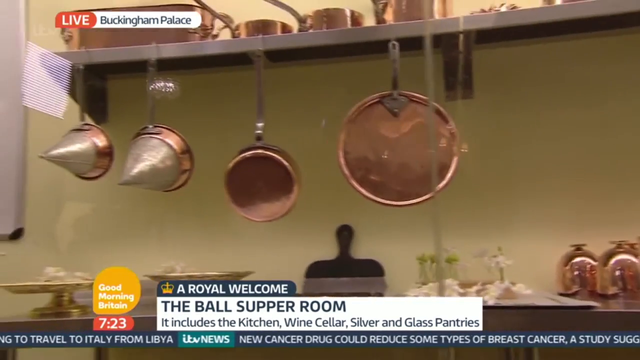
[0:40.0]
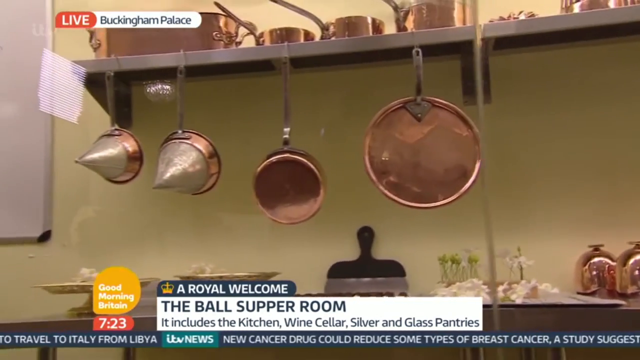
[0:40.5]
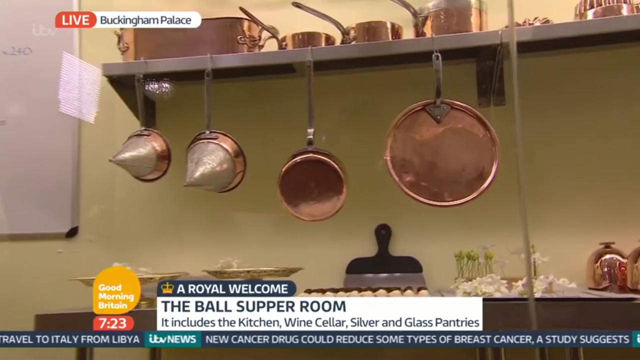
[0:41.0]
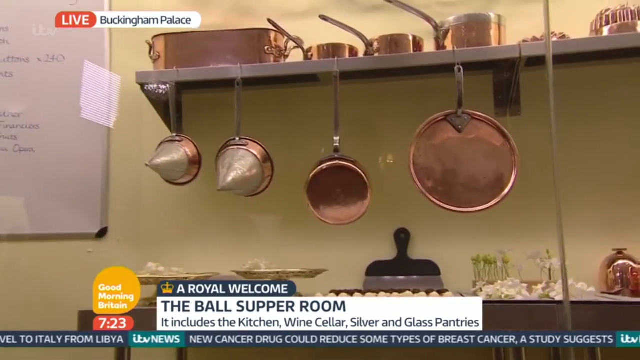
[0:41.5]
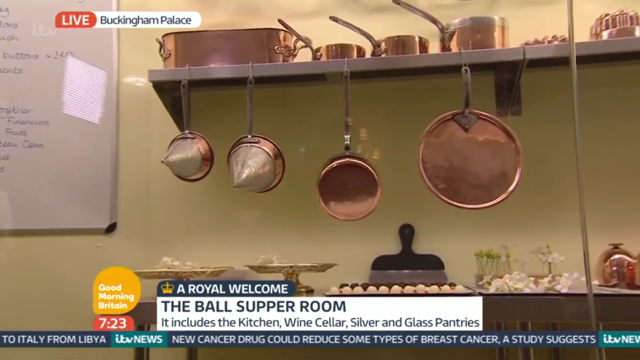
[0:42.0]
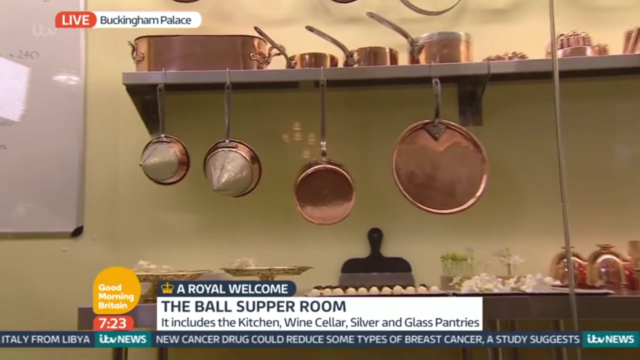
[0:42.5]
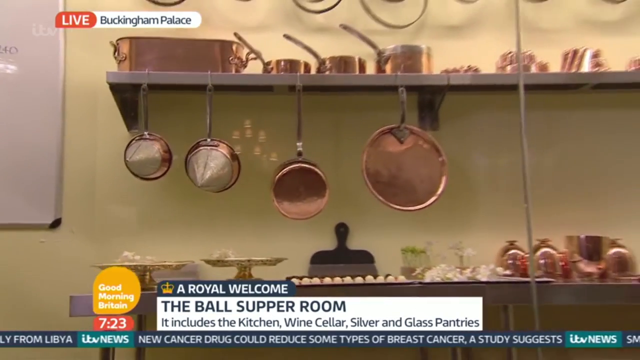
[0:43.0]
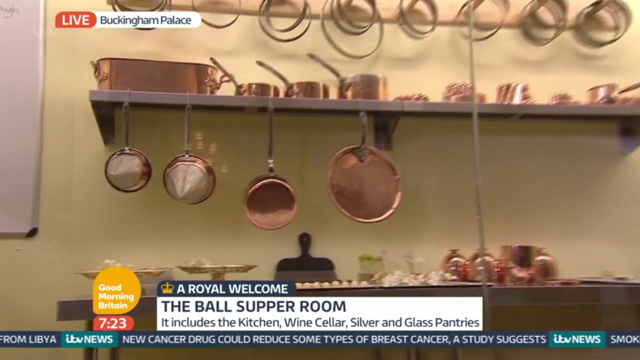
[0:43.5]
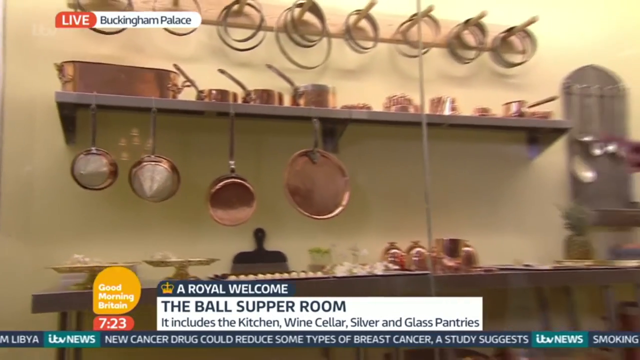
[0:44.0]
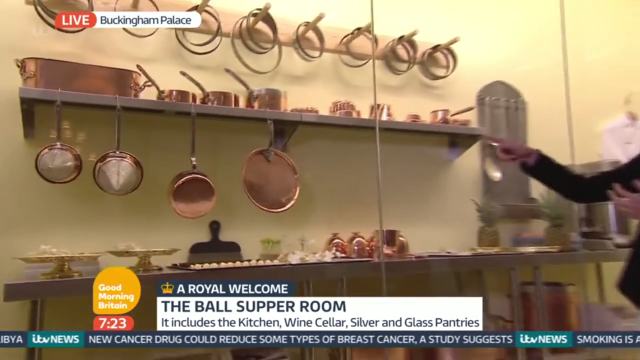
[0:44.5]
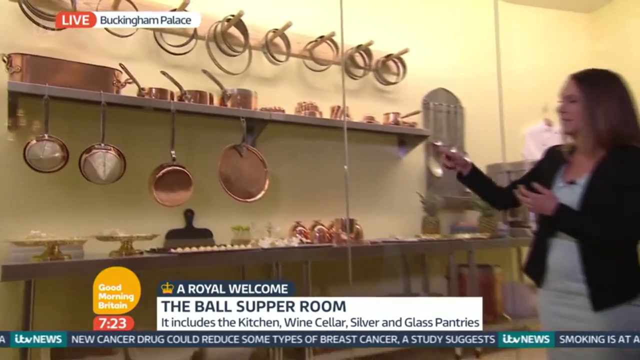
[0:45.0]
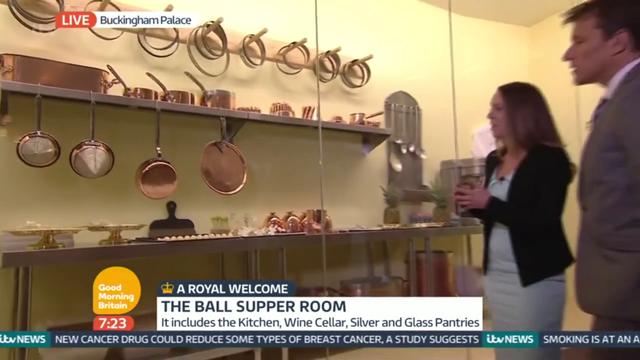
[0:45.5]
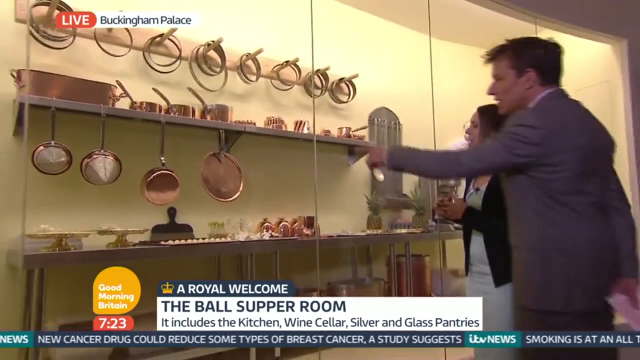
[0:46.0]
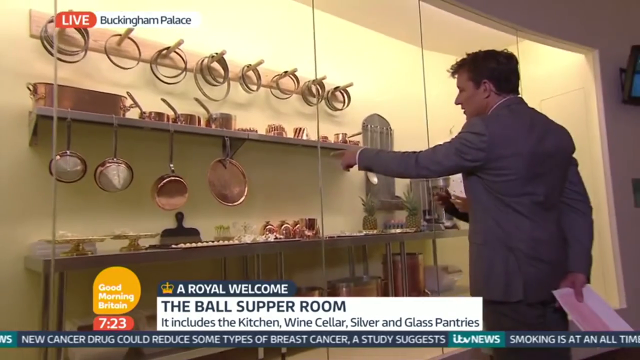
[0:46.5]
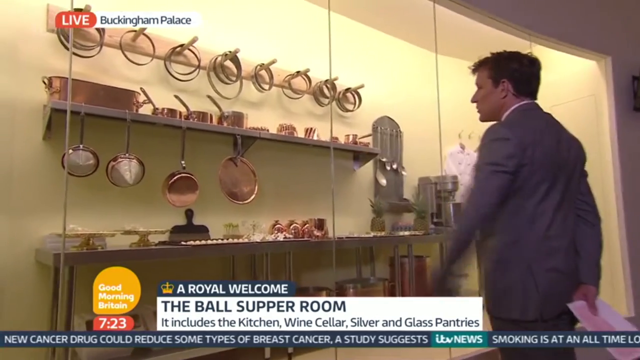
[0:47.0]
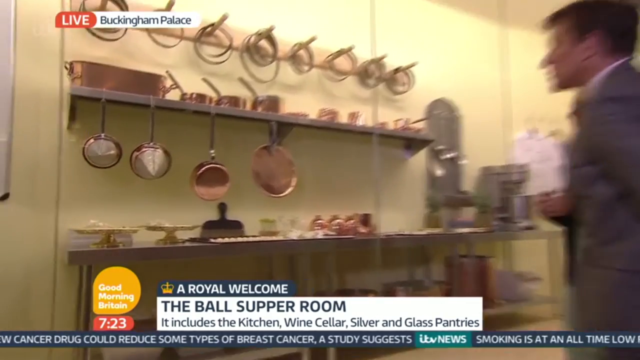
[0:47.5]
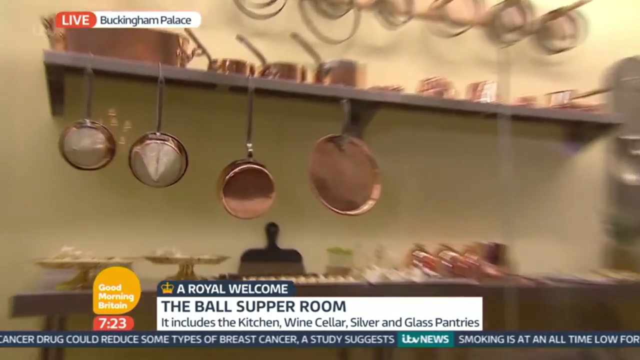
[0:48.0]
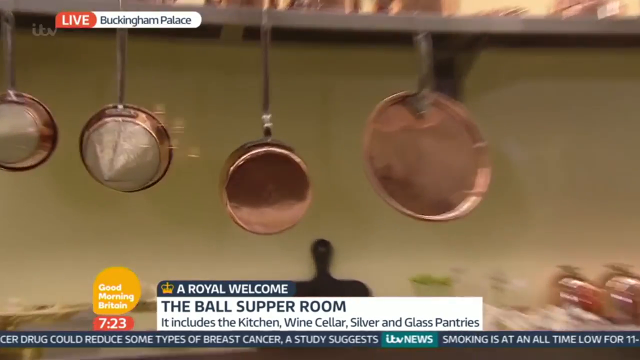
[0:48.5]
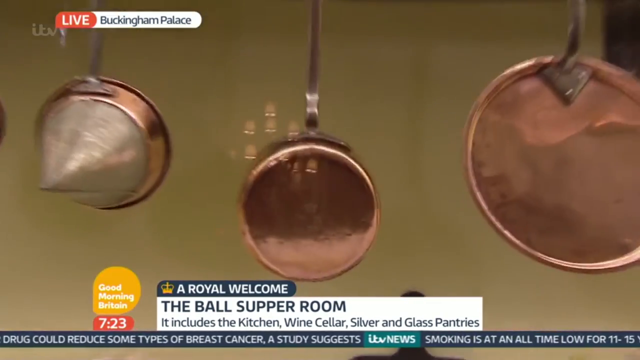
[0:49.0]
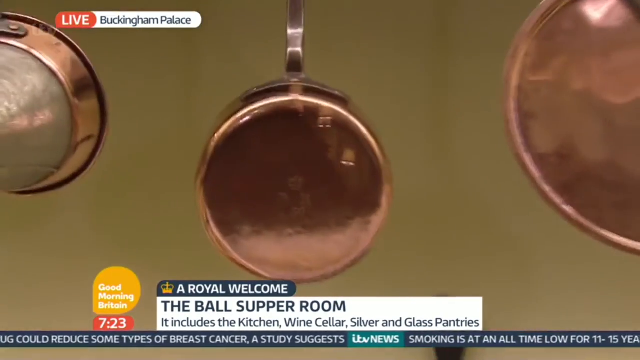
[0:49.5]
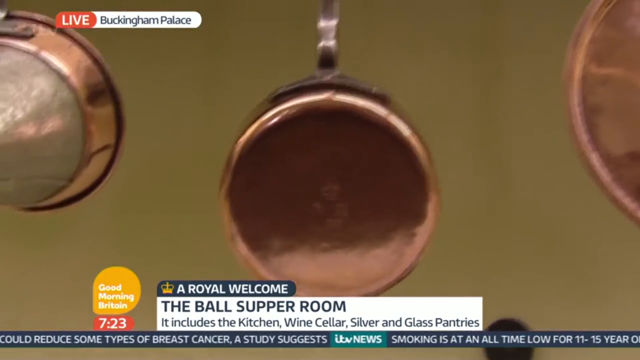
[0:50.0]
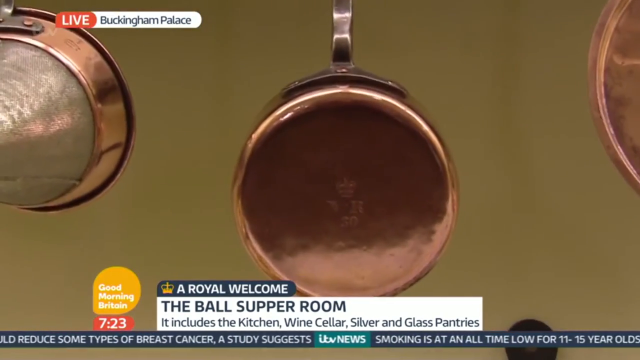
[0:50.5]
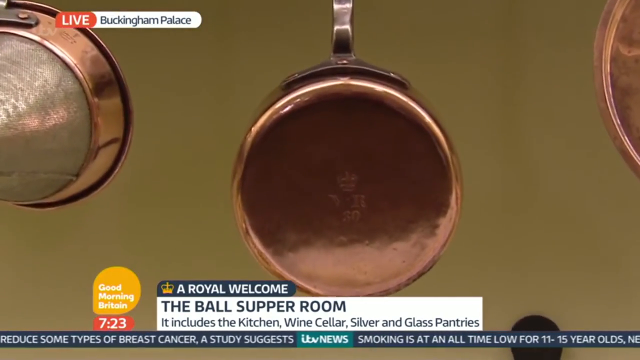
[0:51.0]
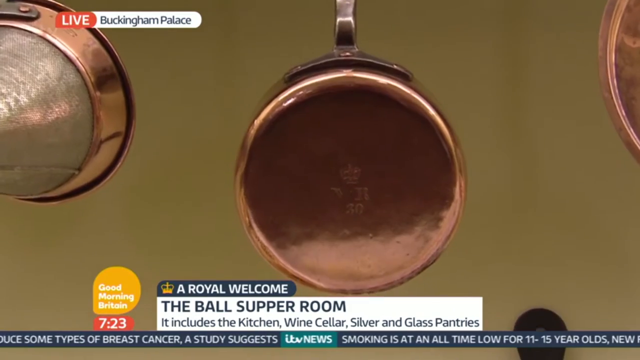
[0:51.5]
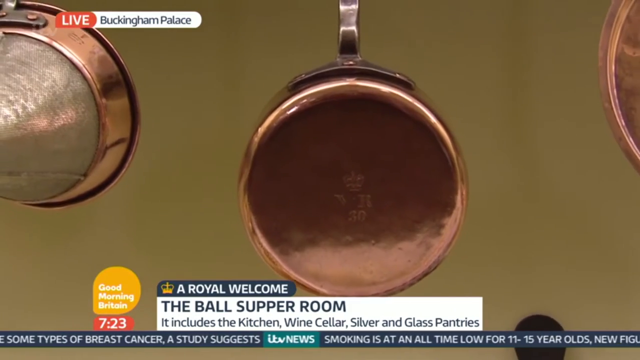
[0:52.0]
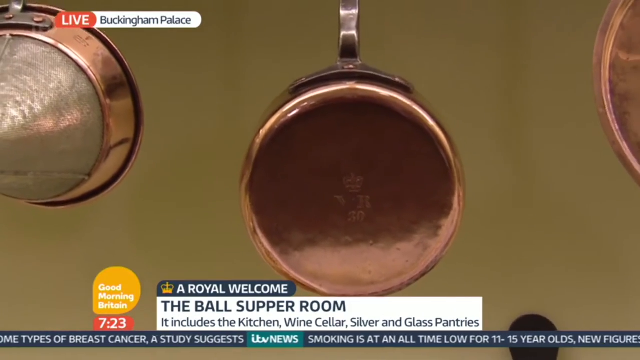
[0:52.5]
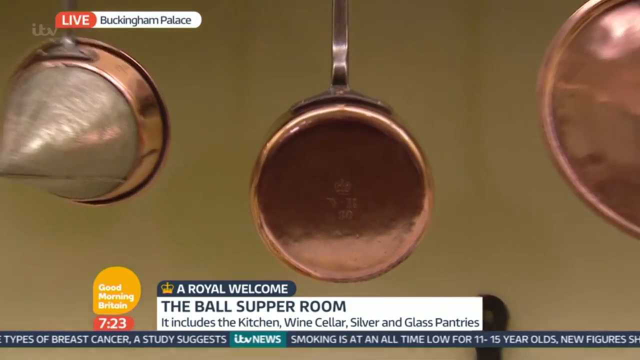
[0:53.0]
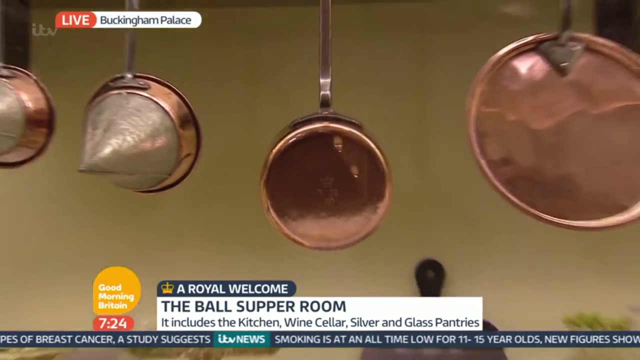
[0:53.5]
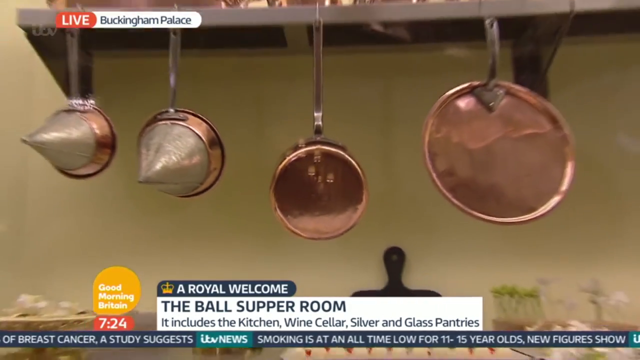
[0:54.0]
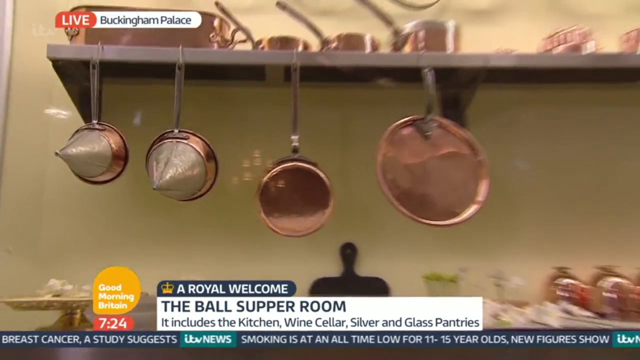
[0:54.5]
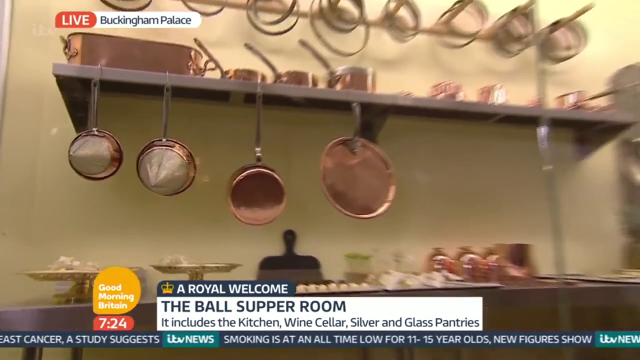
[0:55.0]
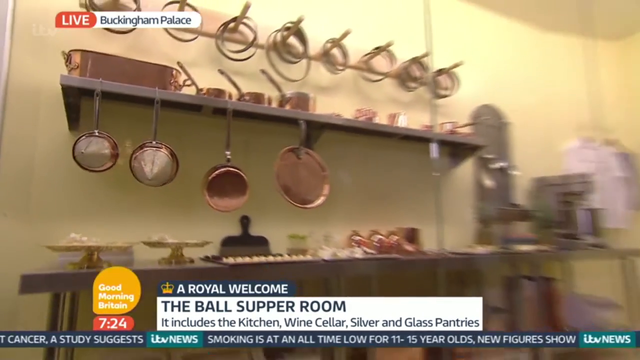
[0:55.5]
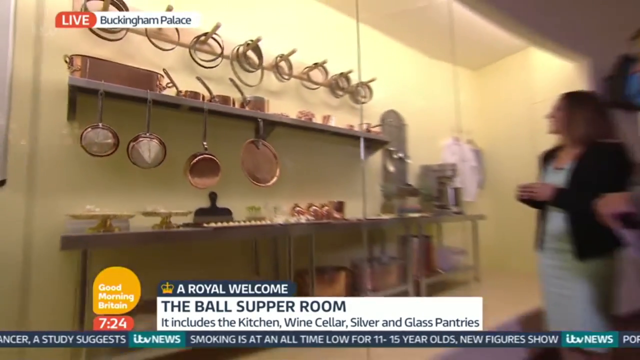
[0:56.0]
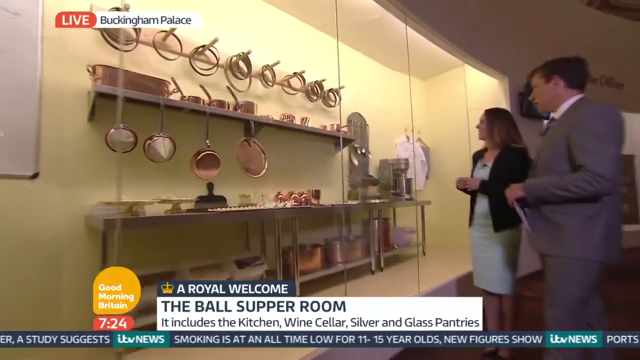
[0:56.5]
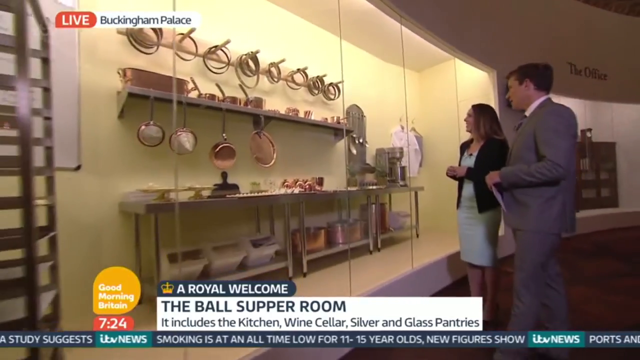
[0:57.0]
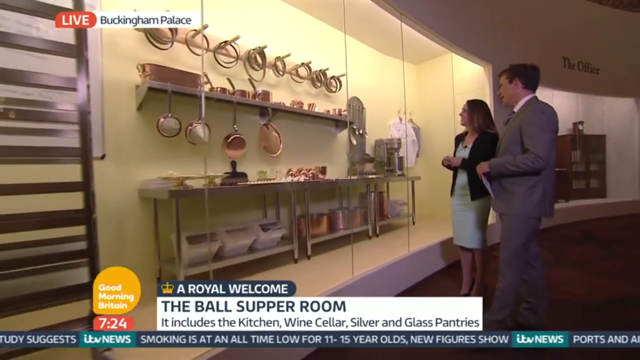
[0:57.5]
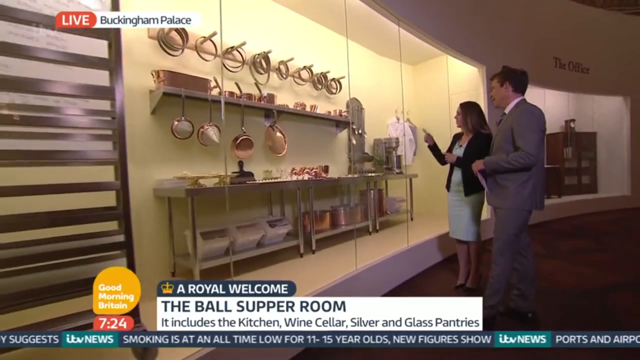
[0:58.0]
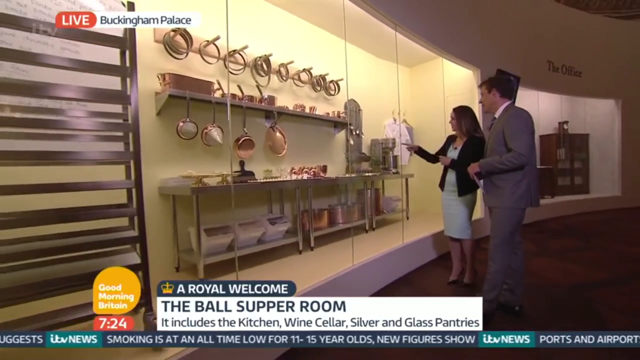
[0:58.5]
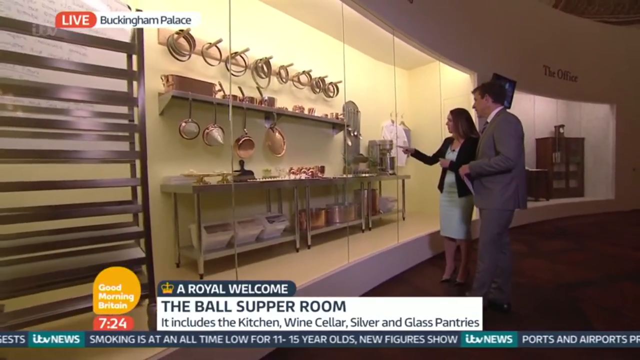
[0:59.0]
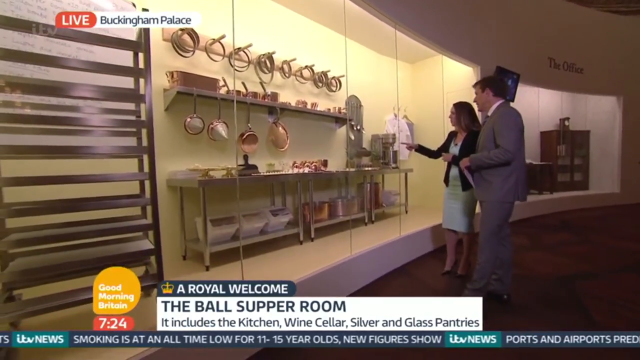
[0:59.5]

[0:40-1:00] The Good Morning Britain graphics remain: an orange bubble in the bottom left with the words "Good Morning Britain", a red bubble below it with "7:23", and to the right a white rectangle reading "the Ball Supper Room" with, below, "it includes the kitchen, wine cellar, silver and glass pantries". Above the white rectangle is a blue curved rectangle about half its size, with a yellow drawn British crown on its left and the words "A Royal Welcome" to the right of the crown. In the top left is a white curved rectangle with "Live" in red on the left side and "Buckingham Palace" on the right side. Through the glass of the kitchen exhibit, a close-up shows multiple bronze pans hanging from the top of a metal shelf; below it is a long metal shelf with different metal plates and saucers on the left side and large bronze containers on the right side. The camera zooms out to show, on the right side, the woman in a white dress and black coat standing to the left of the man in a gray suit and white shirt. The woman points at the exhibit with the index finger of her right hand, then brings it back and clasps her hands in front of her. The man points with his left hand to one of the pans in the exhibit, with his other hand behind his back holding a white card, then retracts his left hand and puts it behind his back. The camera zooms in very closely on one of the hanging bronze metal pans, showing the bottom of the shiny pan with the emblem of a crown etched into it. It zooms slightly back out as the woman points to the upper shelf with the index finger of her right hand and then to something on the center shelf.